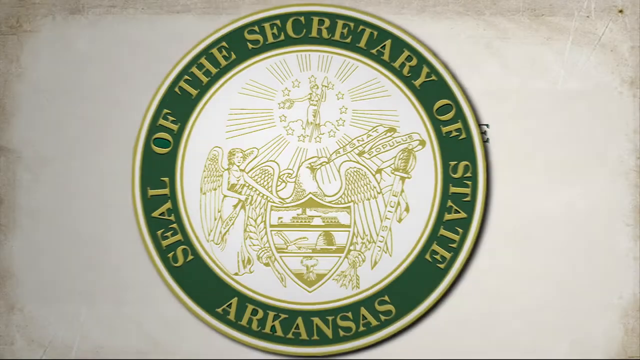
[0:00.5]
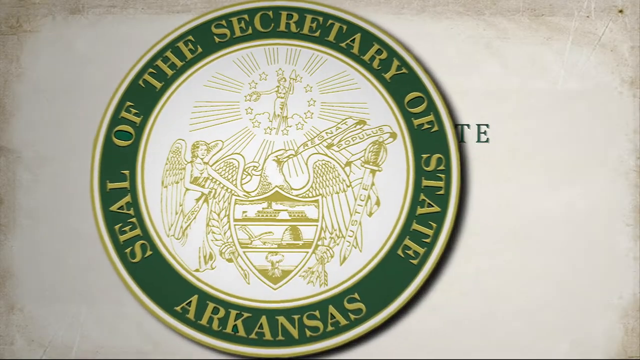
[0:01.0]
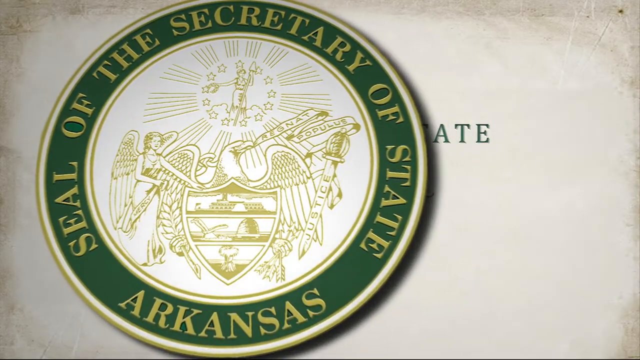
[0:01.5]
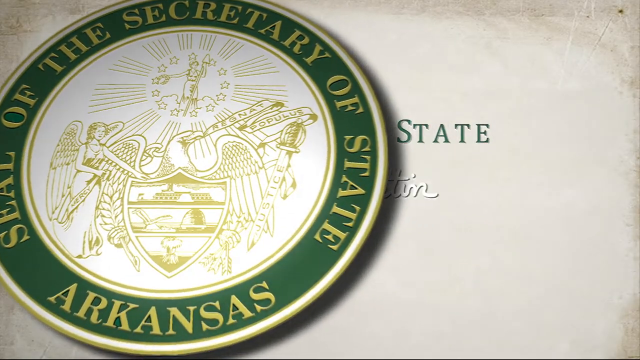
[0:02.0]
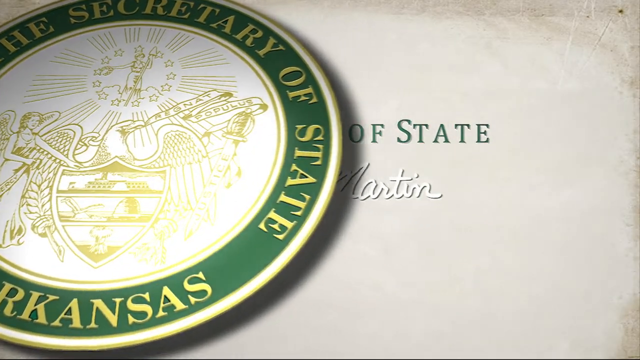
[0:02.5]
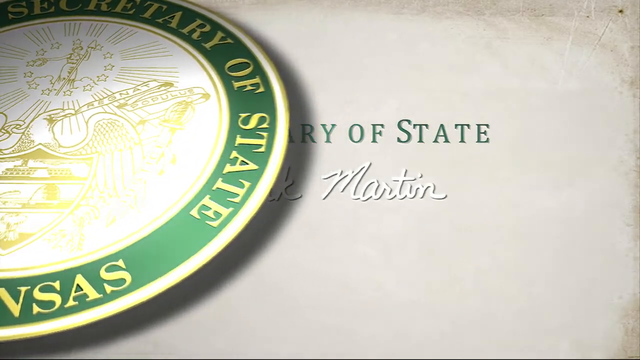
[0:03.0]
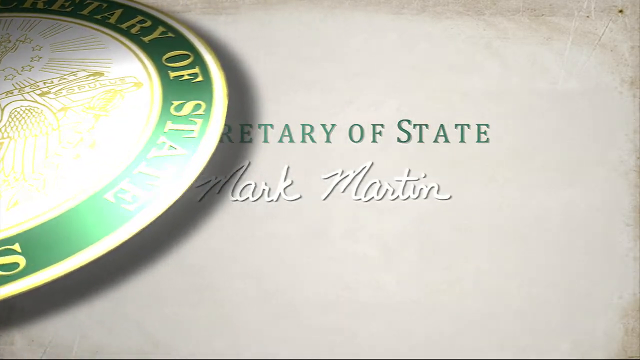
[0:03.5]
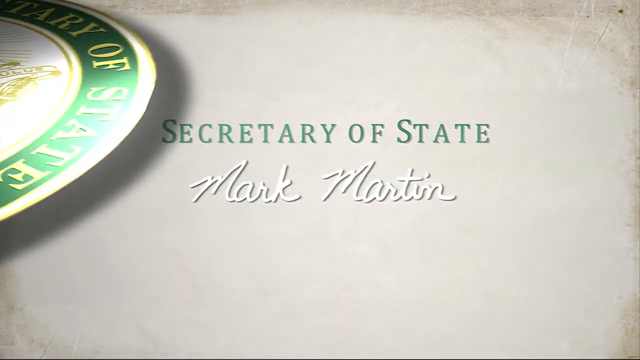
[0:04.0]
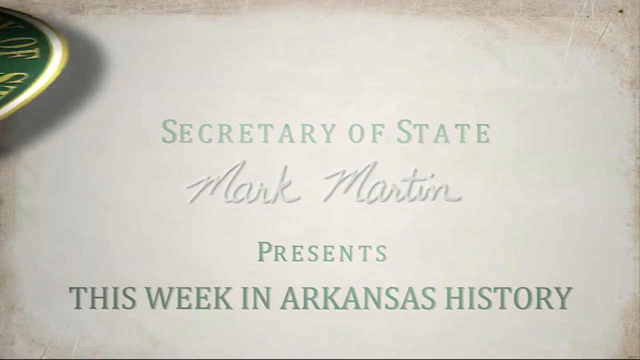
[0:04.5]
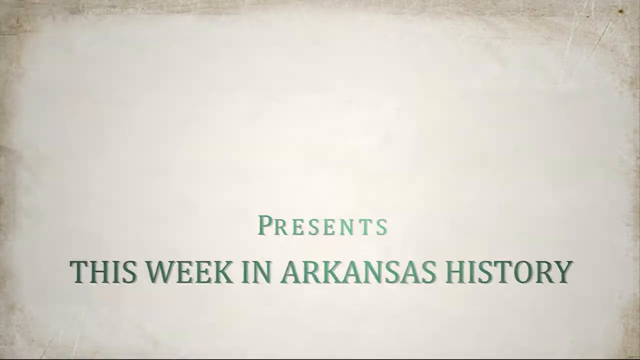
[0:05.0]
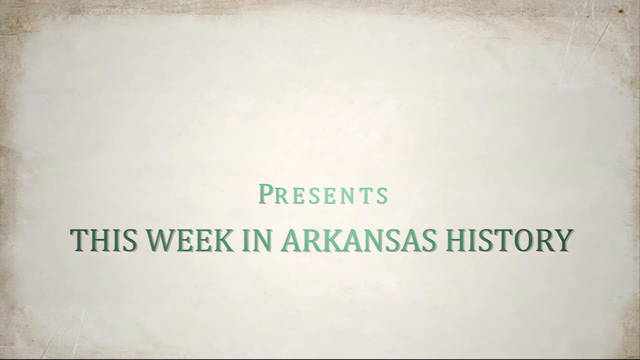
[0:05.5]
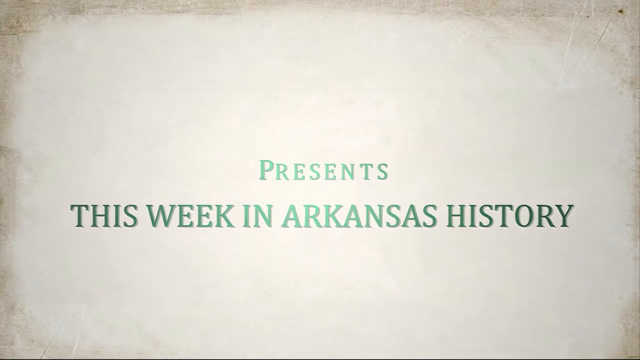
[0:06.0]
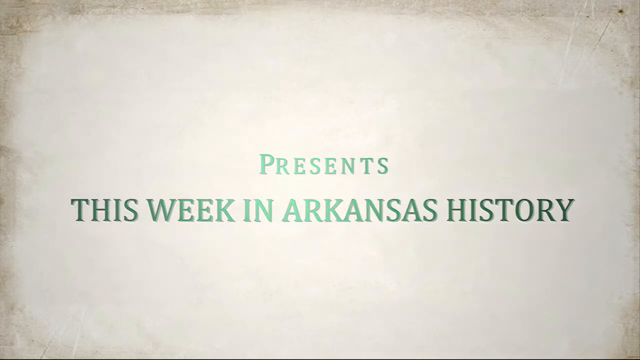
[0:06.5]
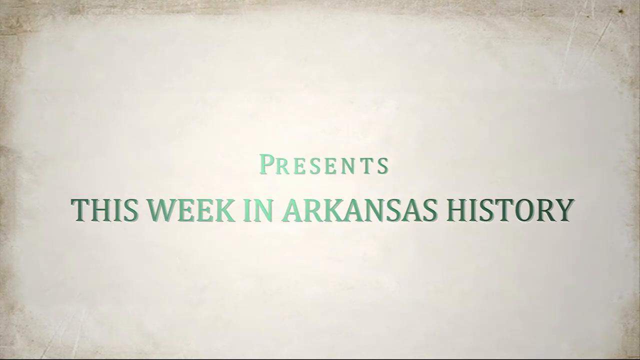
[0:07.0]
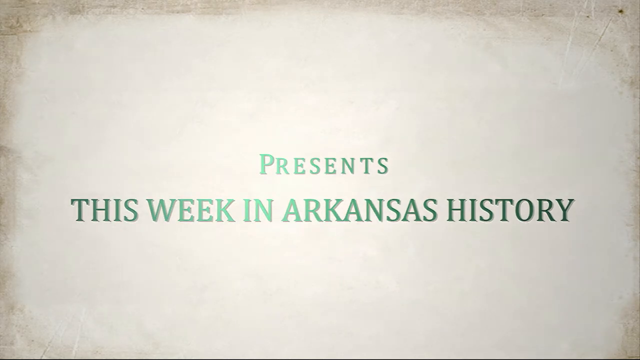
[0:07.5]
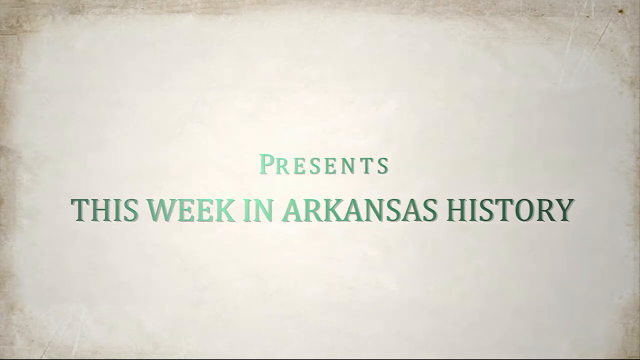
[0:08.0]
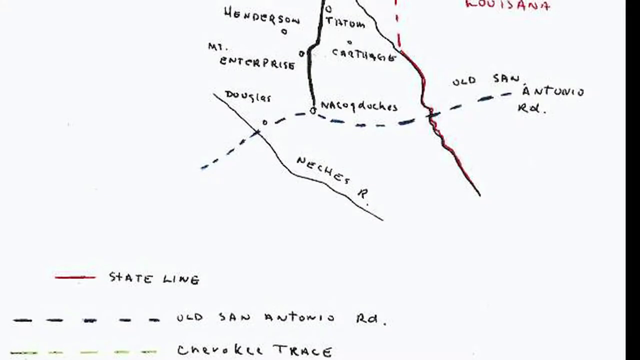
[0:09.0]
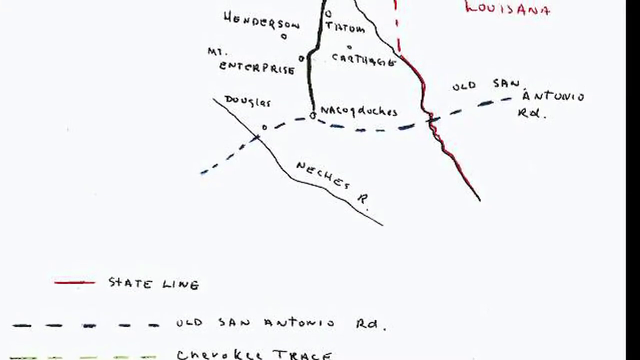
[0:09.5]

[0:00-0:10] A green graphic comes in from the left side, with words written in gold: "Seal of the Secretary of State, Arkansas." Inside it there is a gold drawing of what seems to be an eagle. On the eagle's right side there is a woman, on the left side there seems to be a sword or a knife, and on top there seems to be a woman again. The graphic then moves and leaves words on screen: "Secretary of State Mark Martin presents this week in Arkansas history."